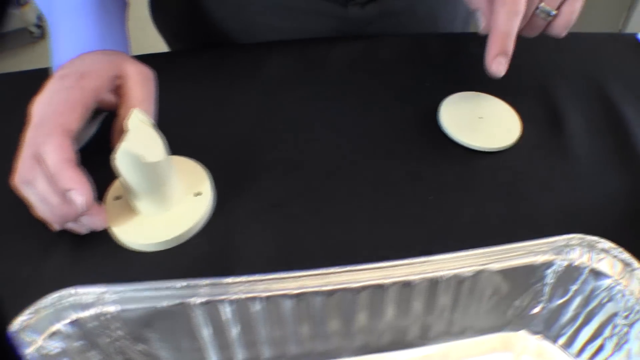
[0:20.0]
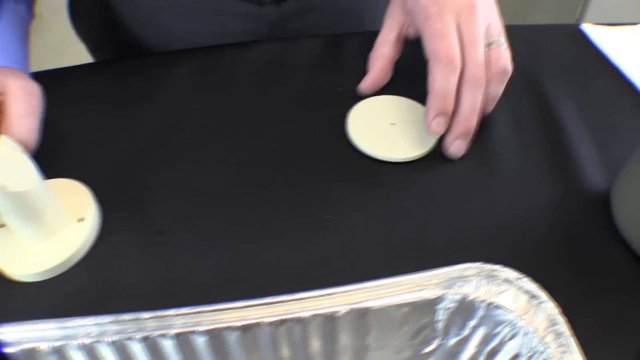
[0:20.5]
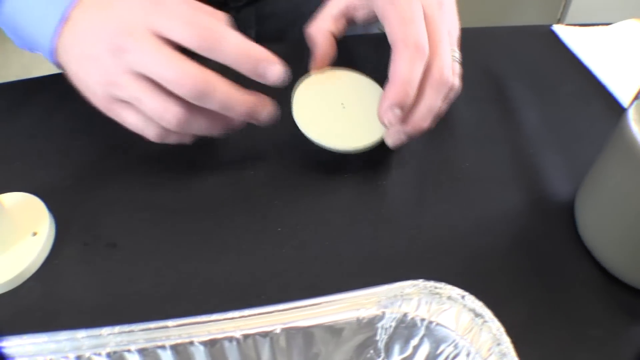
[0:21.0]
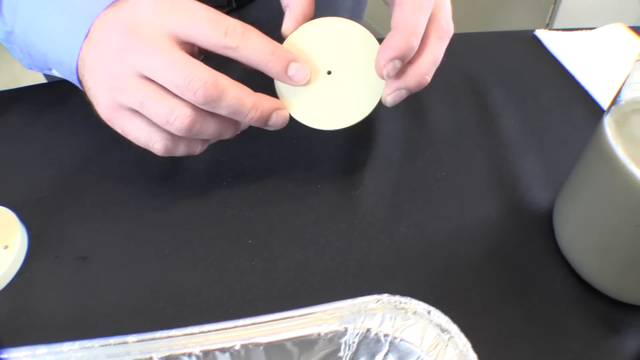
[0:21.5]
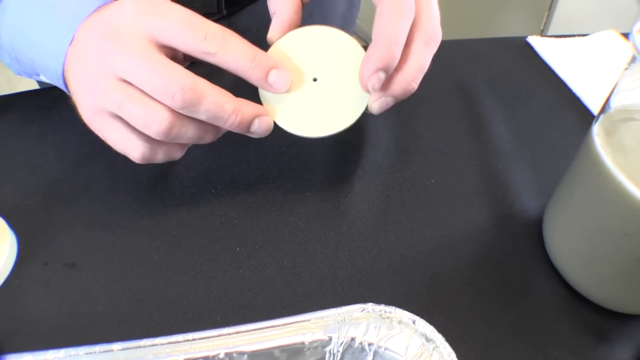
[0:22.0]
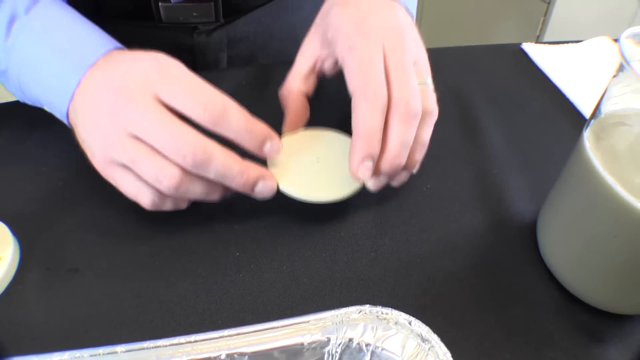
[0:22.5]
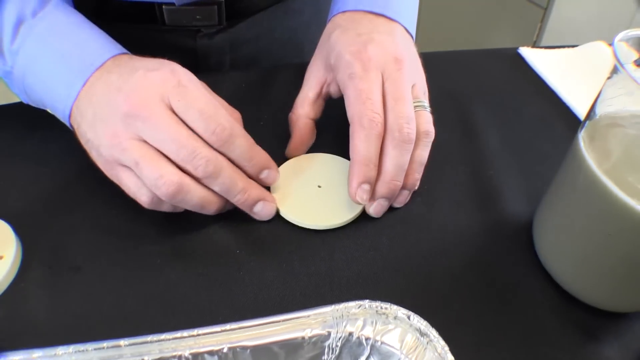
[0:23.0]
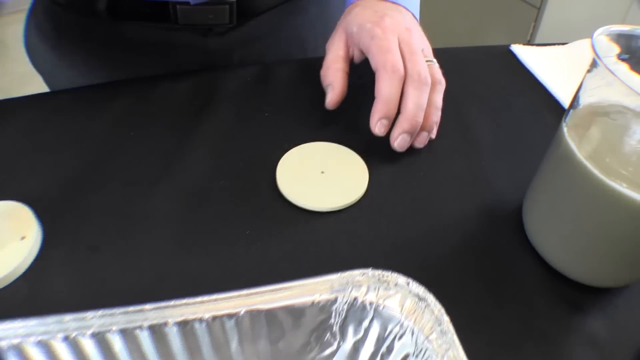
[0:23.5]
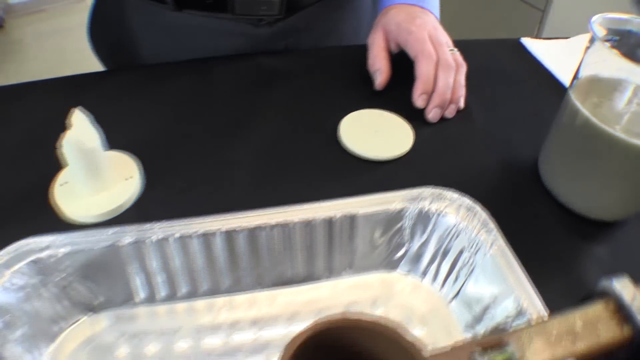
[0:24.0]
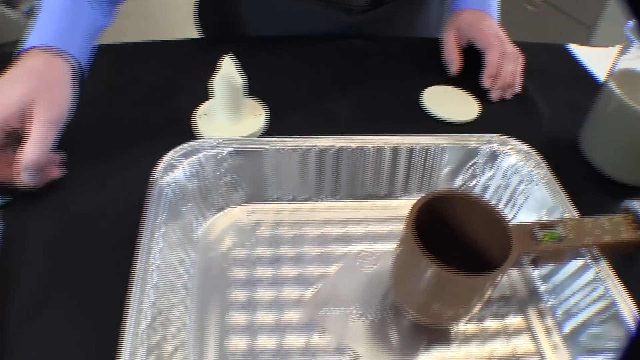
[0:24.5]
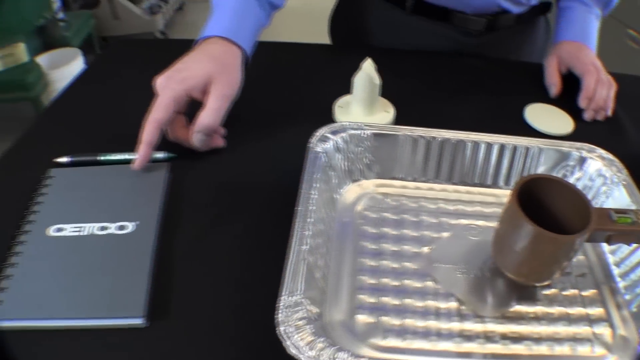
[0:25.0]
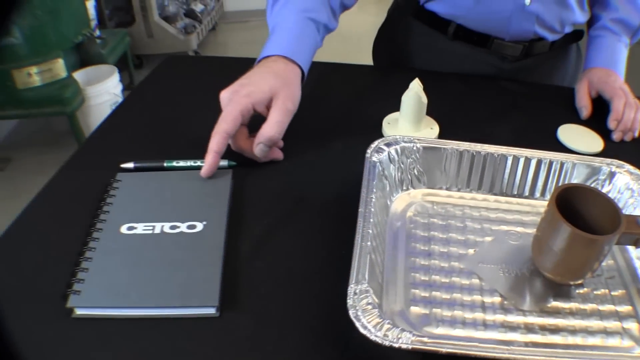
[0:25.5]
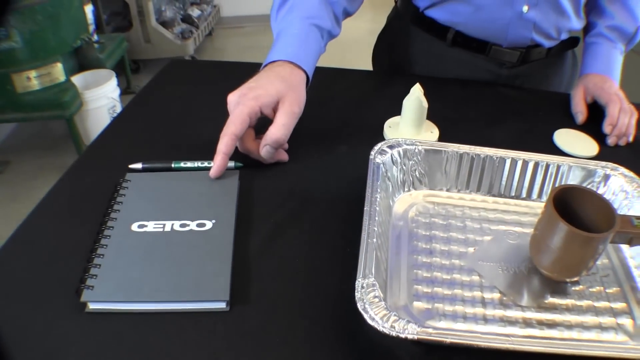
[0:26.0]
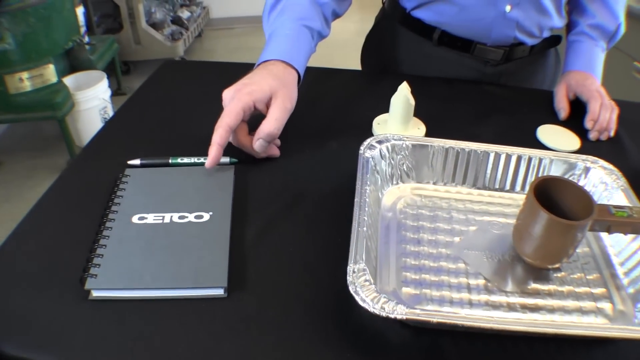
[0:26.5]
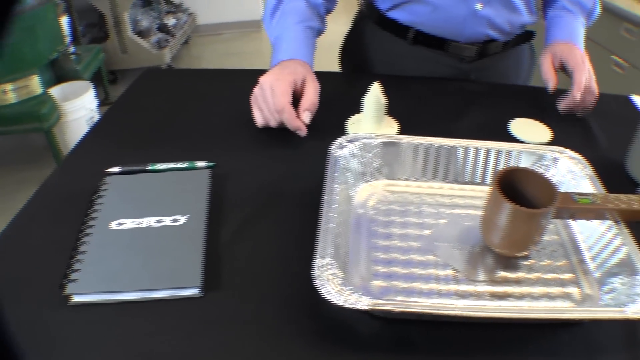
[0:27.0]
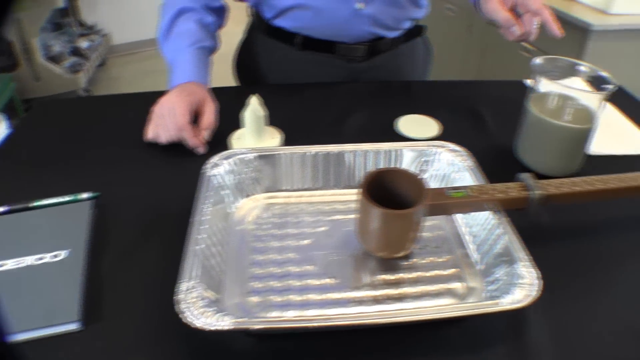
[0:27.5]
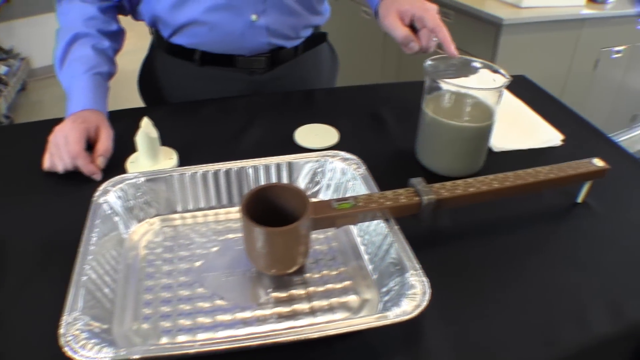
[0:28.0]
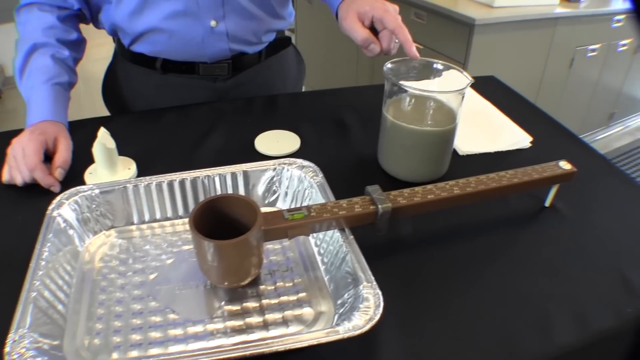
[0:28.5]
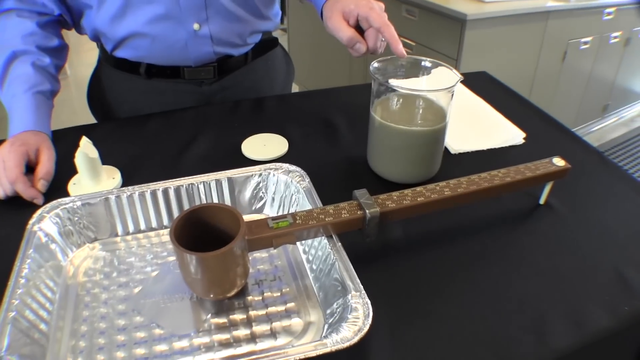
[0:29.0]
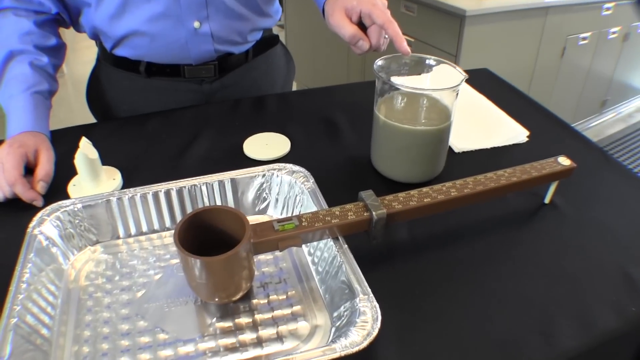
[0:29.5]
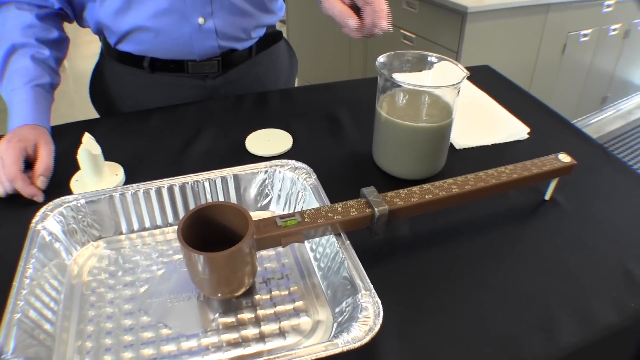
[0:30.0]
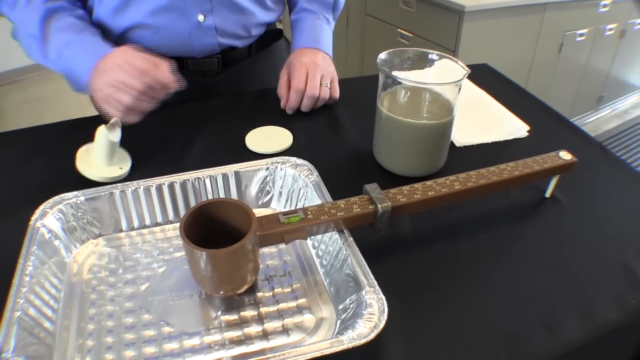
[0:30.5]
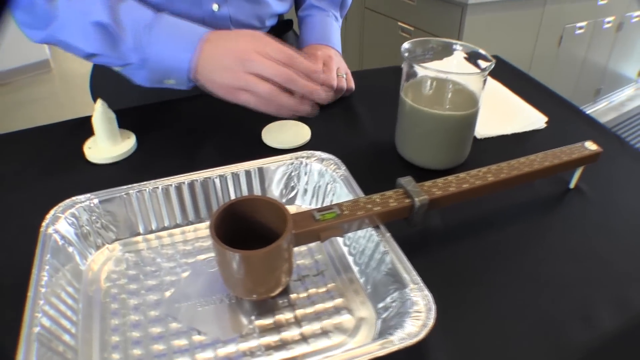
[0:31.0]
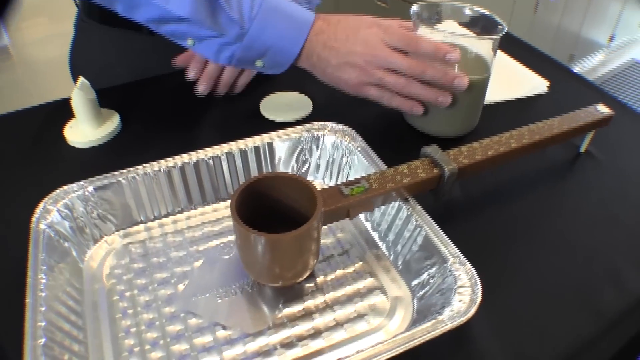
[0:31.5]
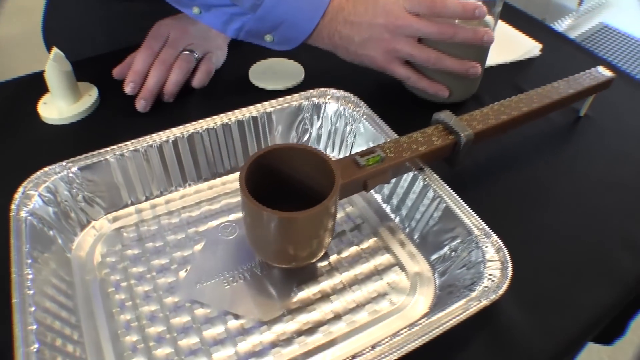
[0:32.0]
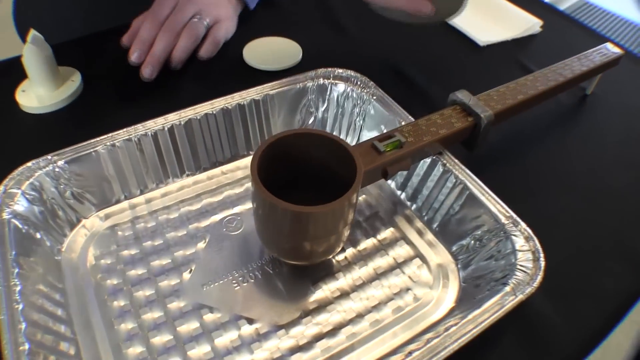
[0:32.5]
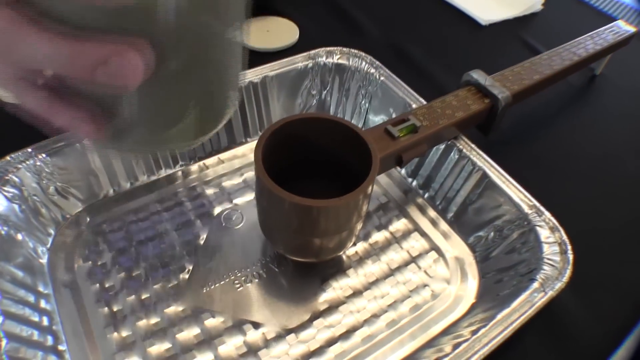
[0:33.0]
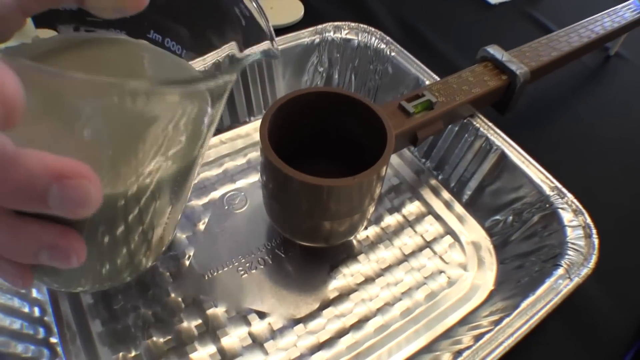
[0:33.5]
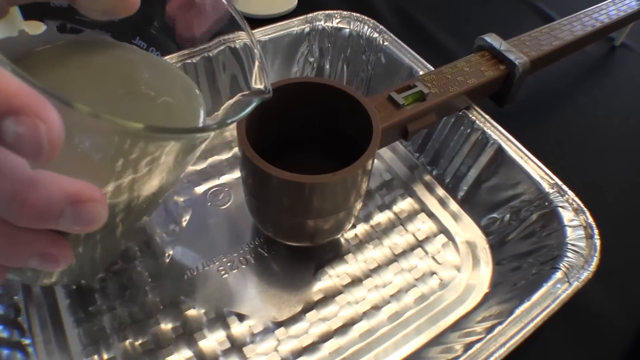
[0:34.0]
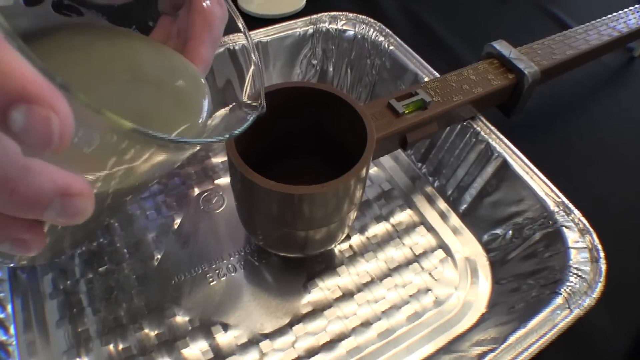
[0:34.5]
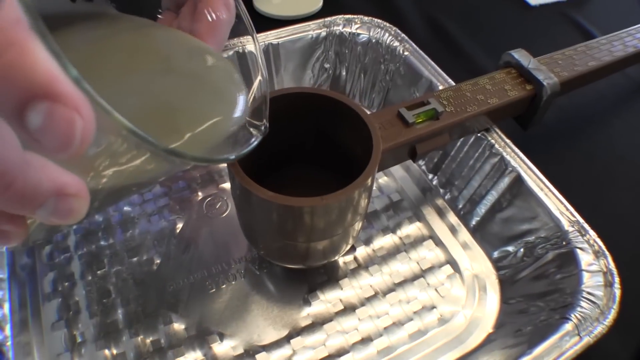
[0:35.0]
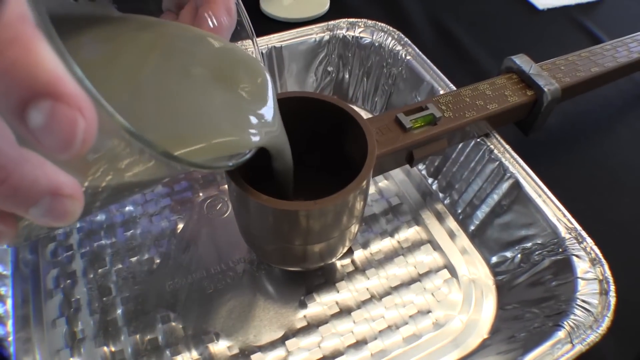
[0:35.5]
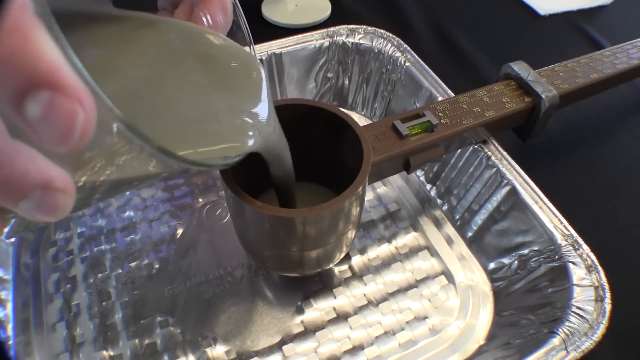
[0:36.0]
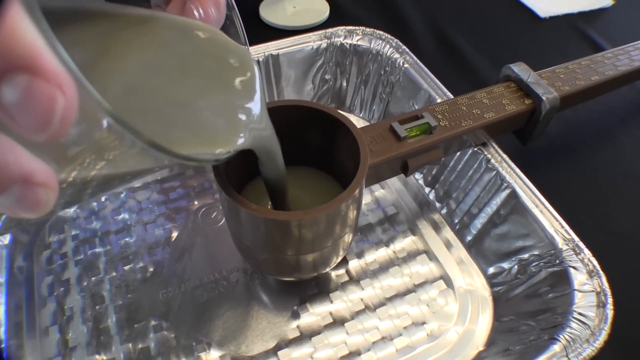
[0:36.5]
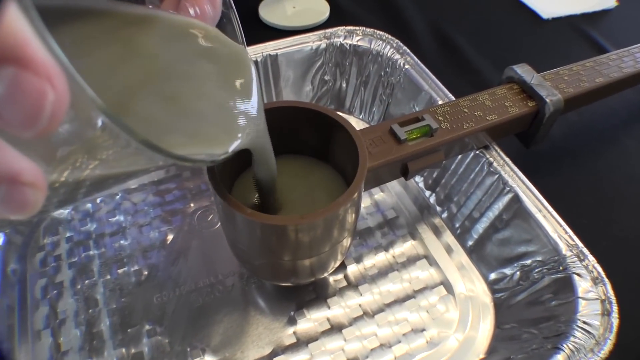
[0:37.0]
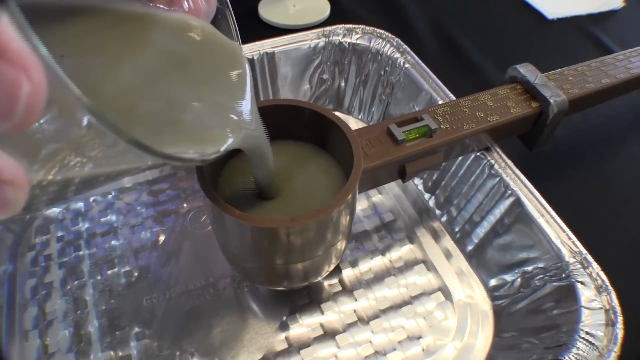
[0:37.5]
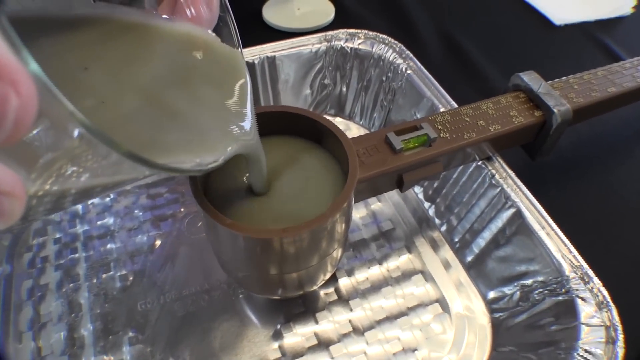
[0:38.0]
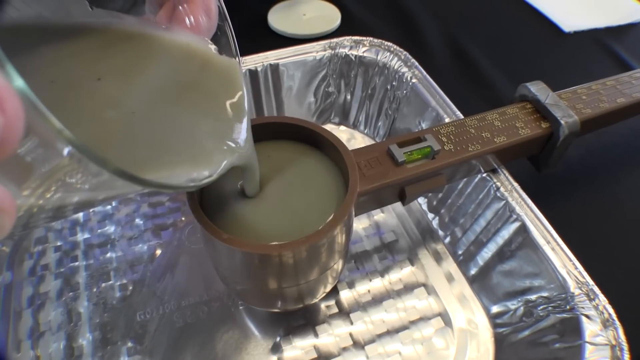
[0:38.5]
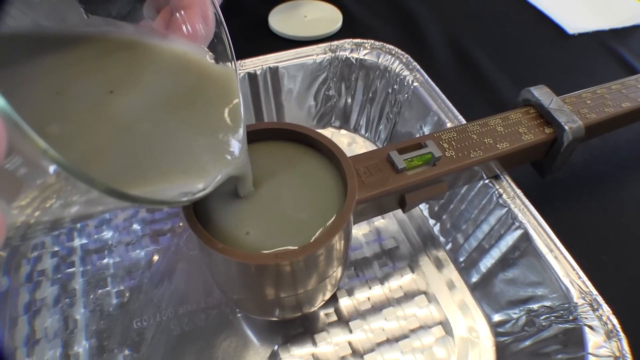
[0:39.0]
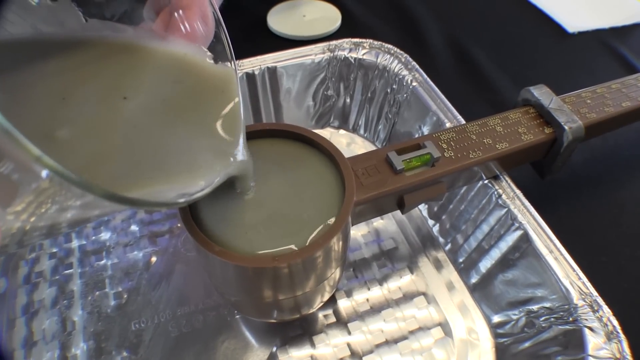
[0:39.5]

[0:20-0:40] The person holds up a white disc and shows it to the camera, then points at the CETCO notebook that is also on the table. He then uses his left hand to point at the beaker with the mud solution in it. The brown measurement apparatus has a cup, and the cup end is inside the aluminum foil tray. The person picks up the beaker with his right hand and starts pouring the mud into the cup of the apparatus. His face is never seen; only his hands, arms and a small part of his torso are visible, and the video stays focused on what is happening at the table. He wears a wedding ring on his left ring finger. A couple of paper towels are on the counter to the person's right.